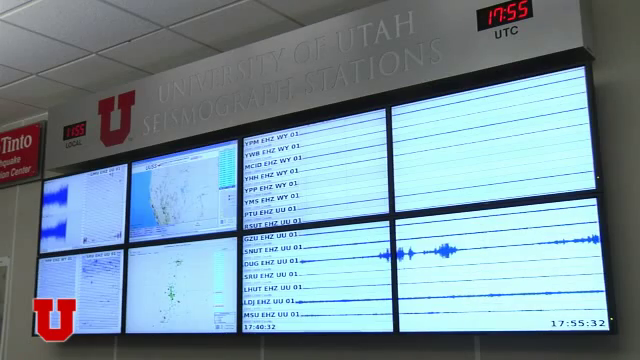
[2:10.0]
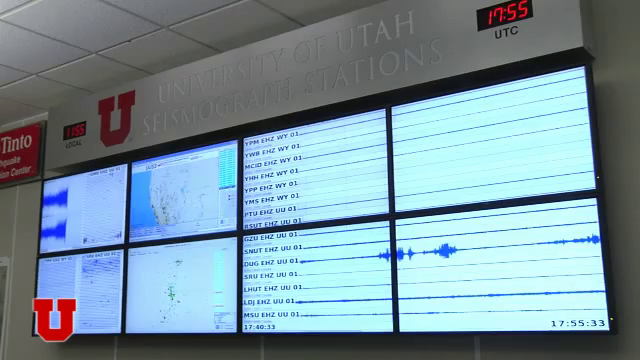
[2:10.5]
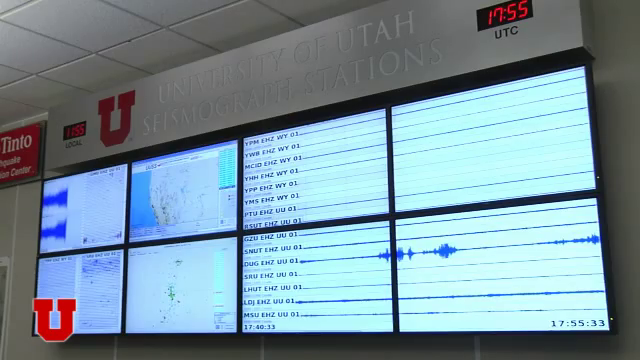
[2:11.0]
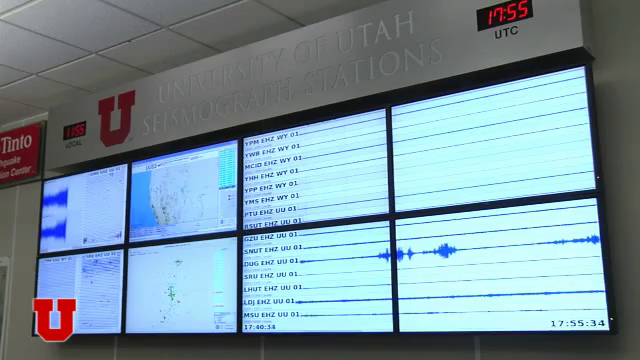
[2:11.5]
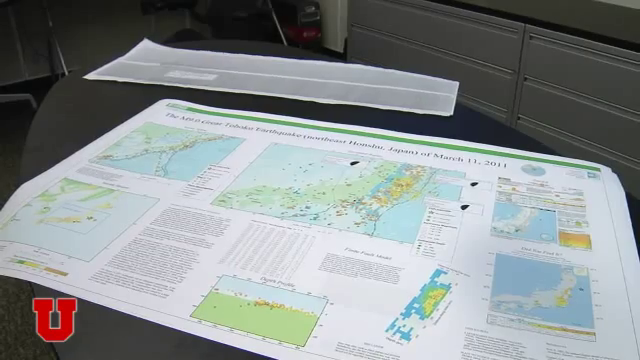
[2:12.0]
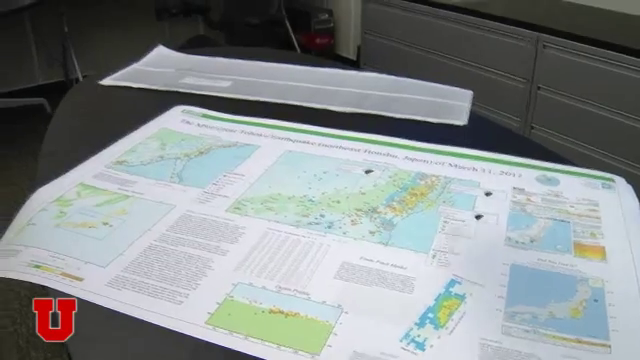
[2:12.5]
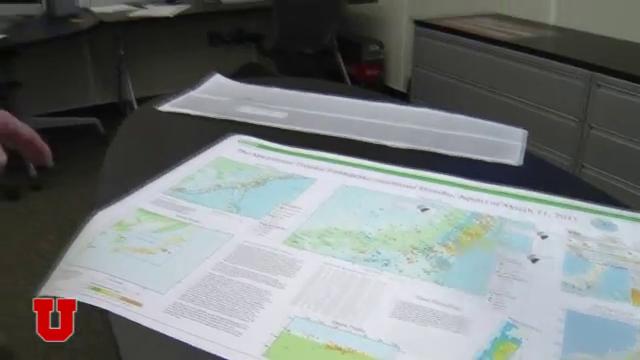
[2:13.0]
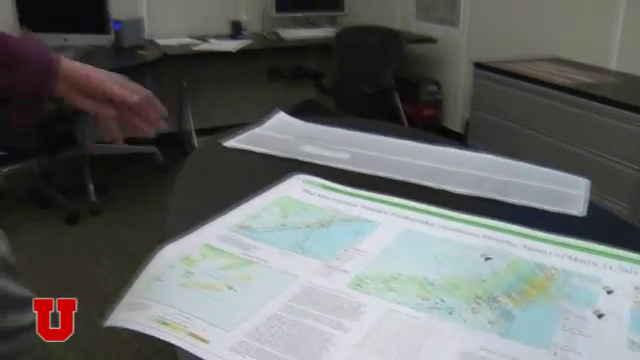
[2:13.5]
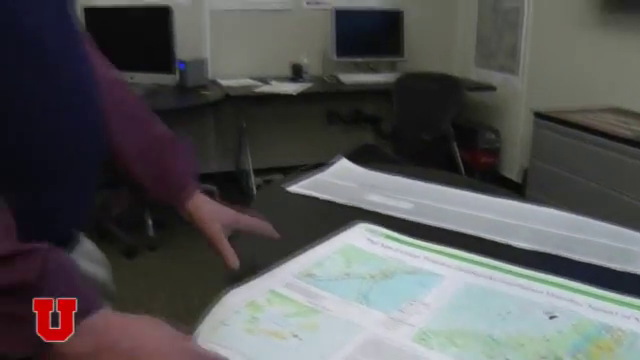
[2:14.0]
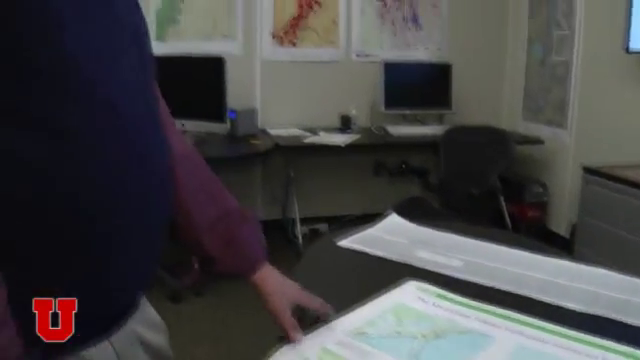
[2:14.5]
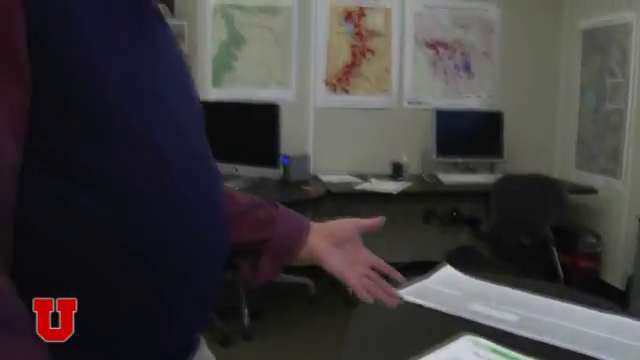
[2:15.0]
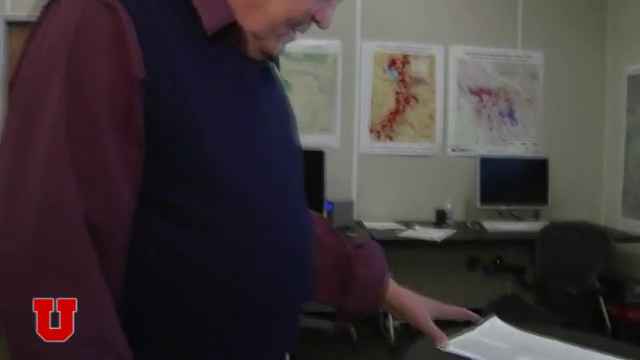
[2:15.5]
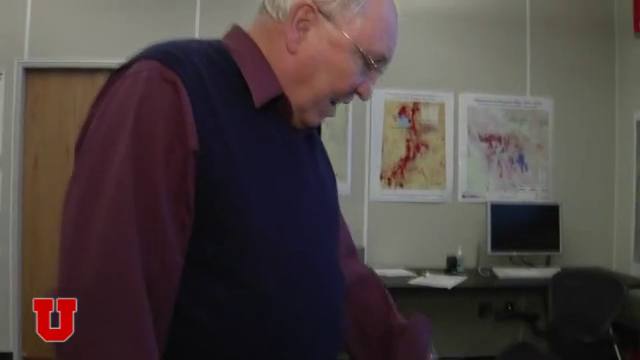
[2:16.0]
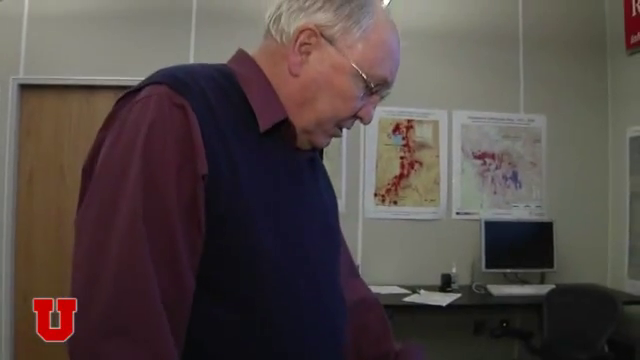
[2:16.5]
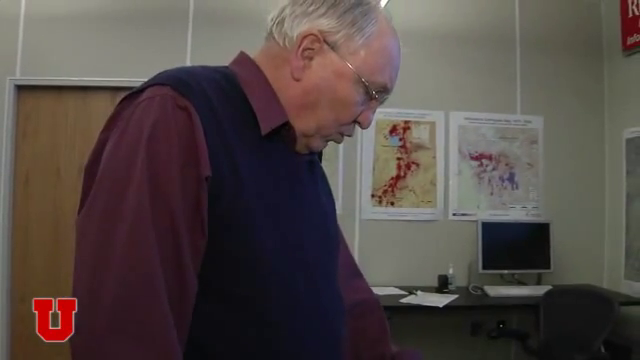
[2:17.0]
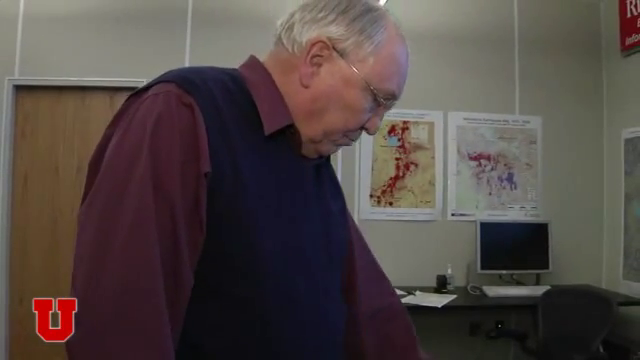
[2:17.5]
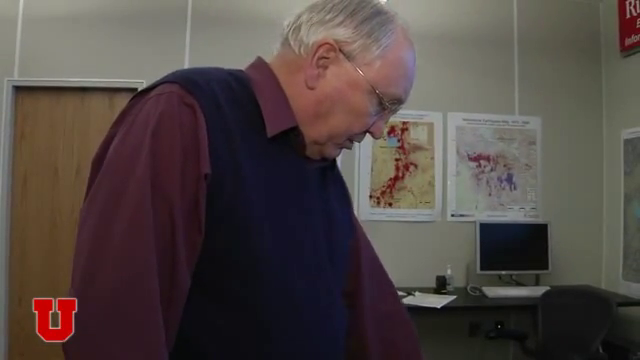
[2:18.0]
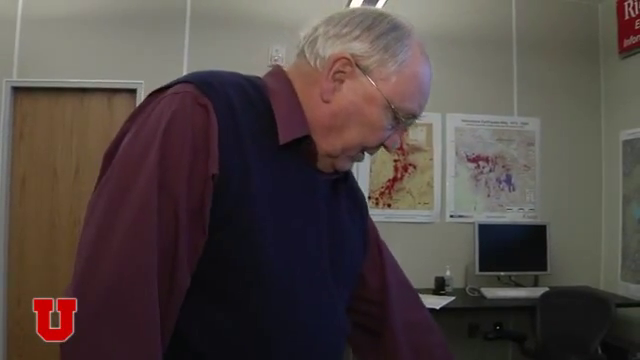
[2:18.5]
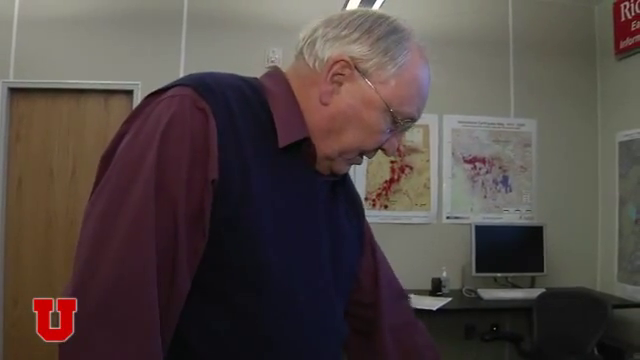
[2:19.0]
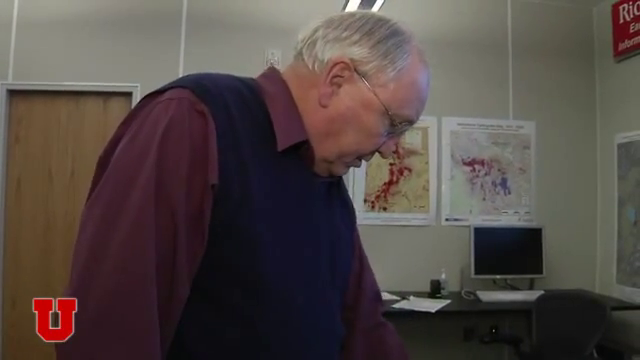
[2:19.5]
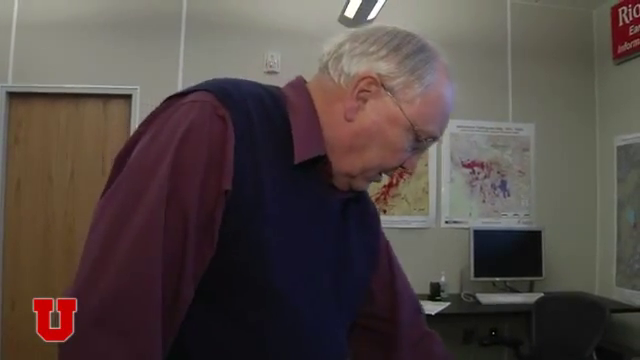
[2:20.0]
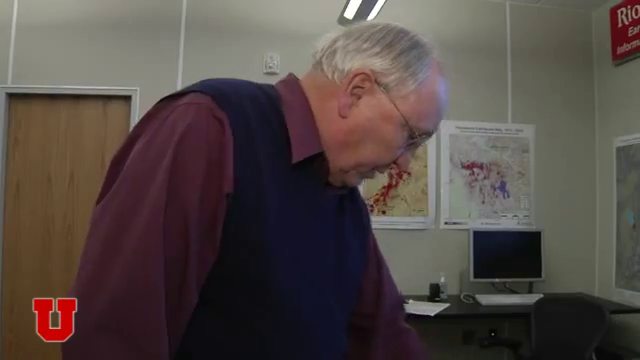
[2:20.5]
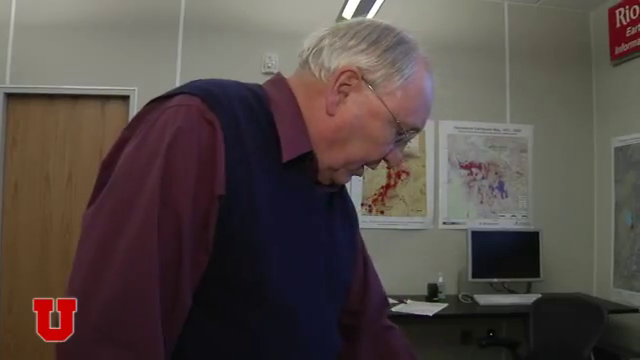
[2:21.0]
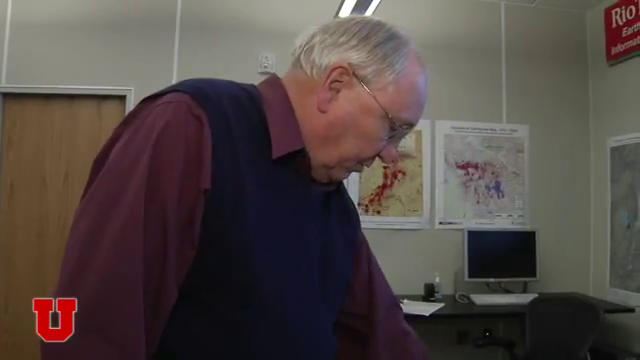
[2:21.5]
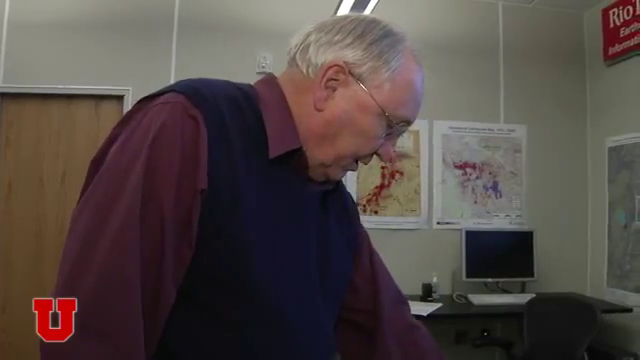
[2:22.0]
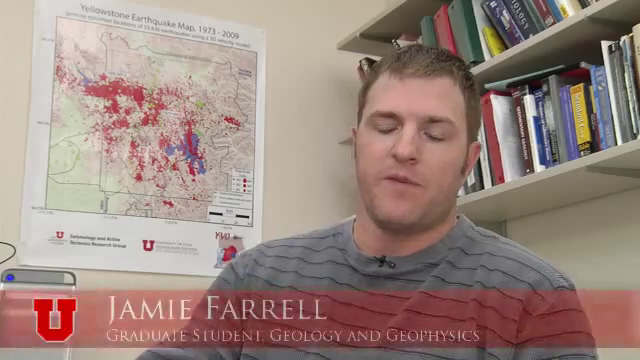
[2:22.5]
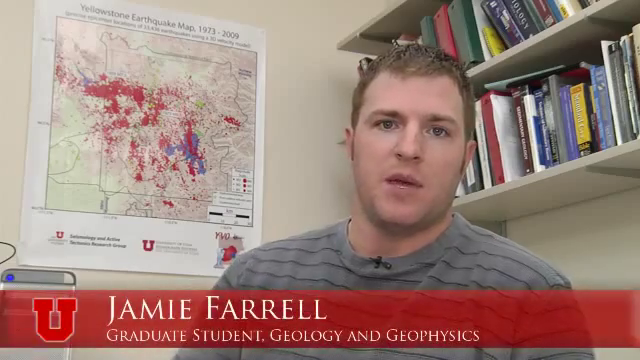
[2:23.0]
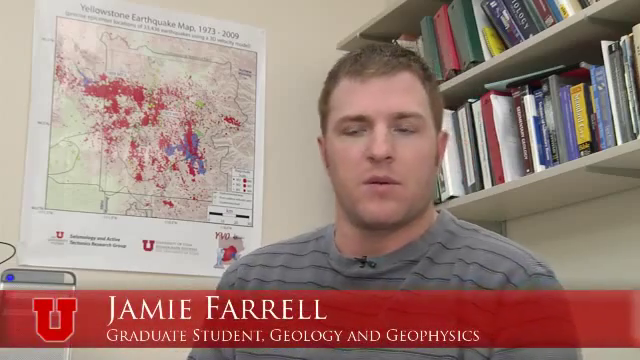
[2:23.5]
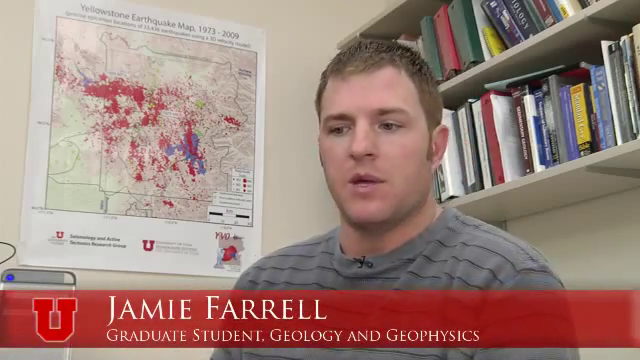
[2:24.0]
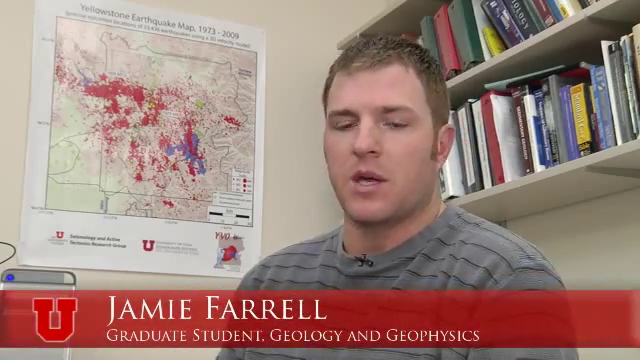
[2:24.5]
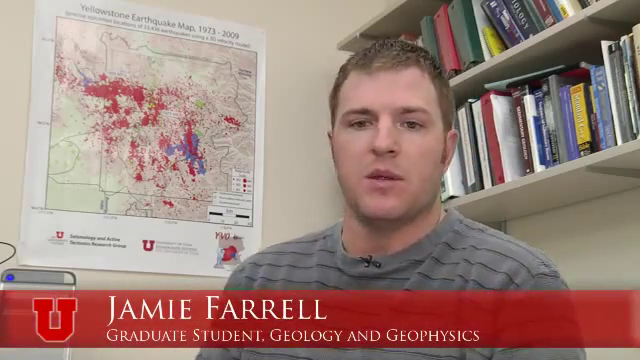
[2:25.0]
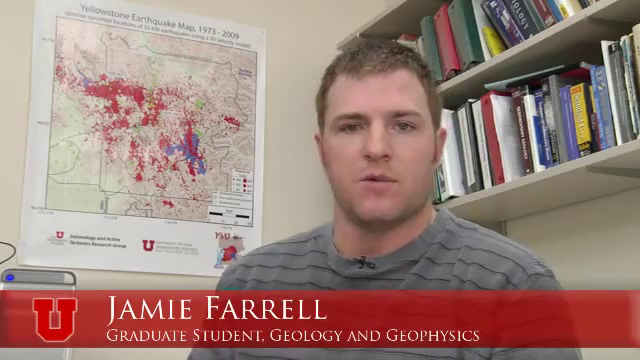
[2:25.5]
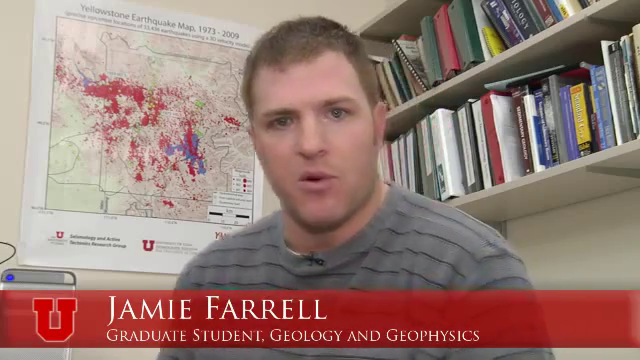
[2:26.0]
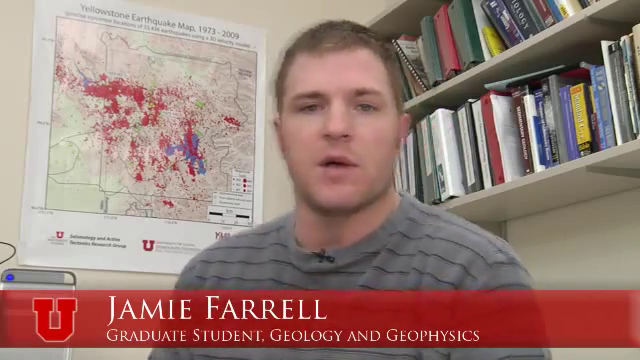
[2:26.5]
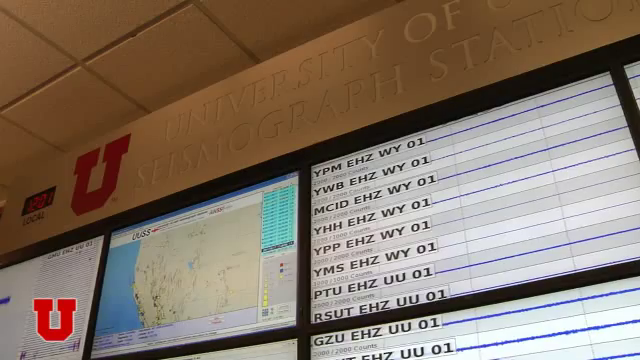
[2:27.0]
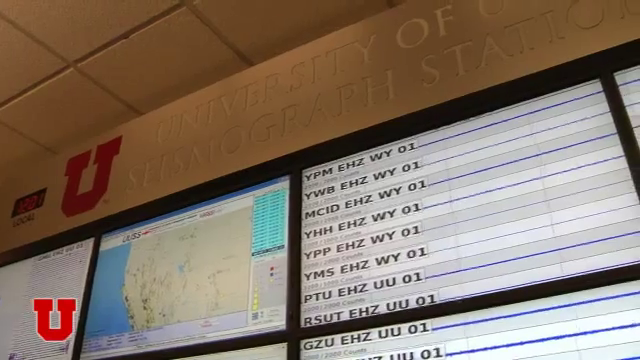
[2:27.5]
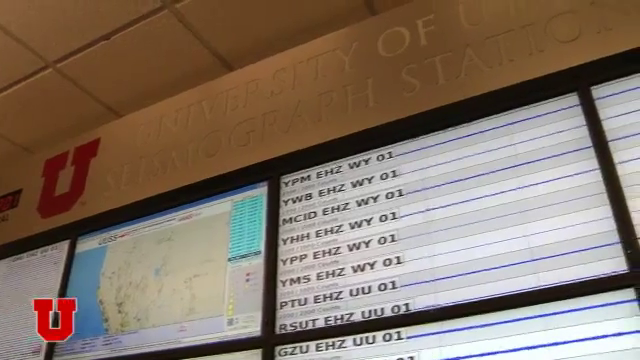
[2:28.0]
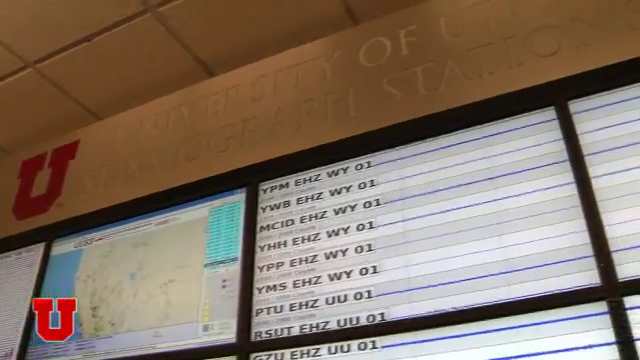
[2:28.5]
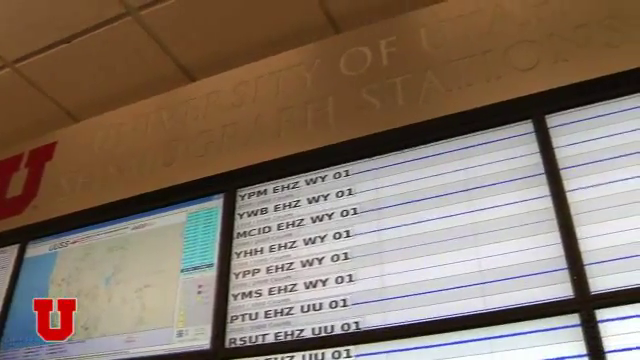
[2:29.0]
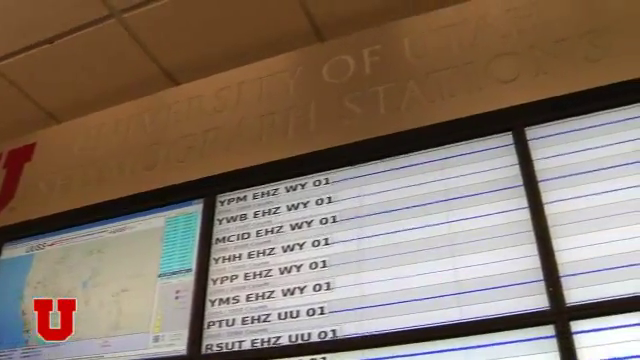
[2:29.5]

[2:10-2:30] Jamie, a grad student in geology, is introduced and talks. Screens are shown with some maps and presumably the strength of some earthquakes; the screens are hard to see. Other maps lie on a table, and someone's hand brushes over them.